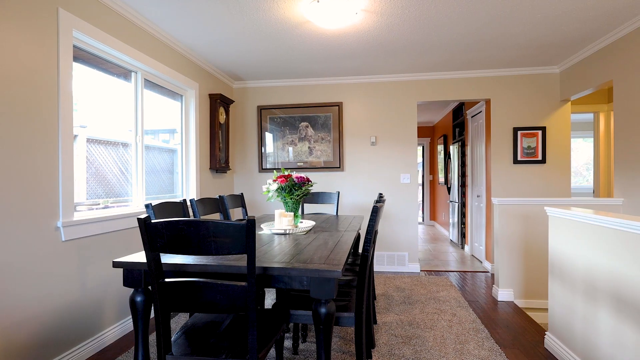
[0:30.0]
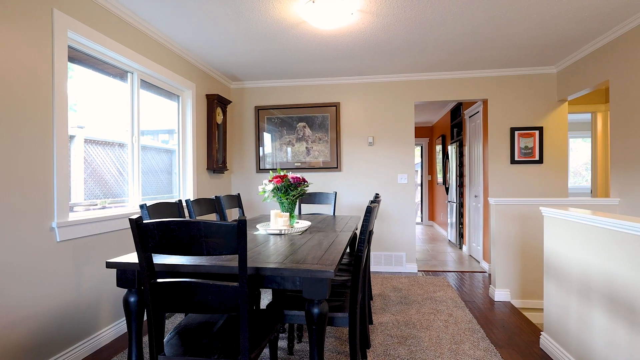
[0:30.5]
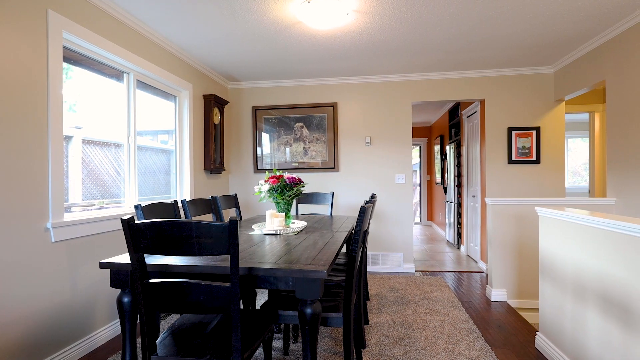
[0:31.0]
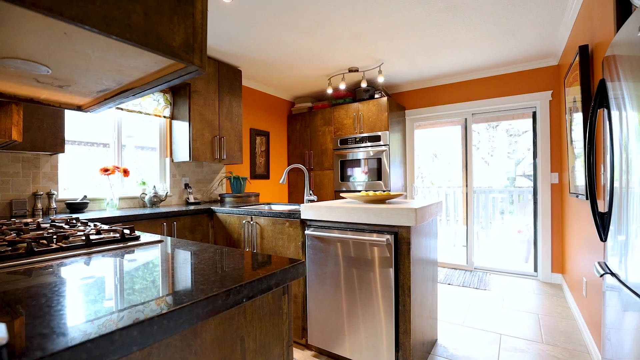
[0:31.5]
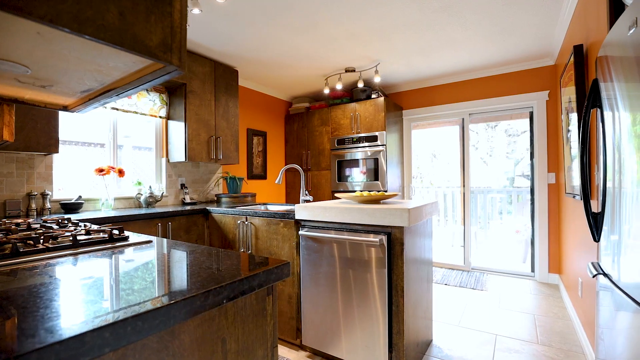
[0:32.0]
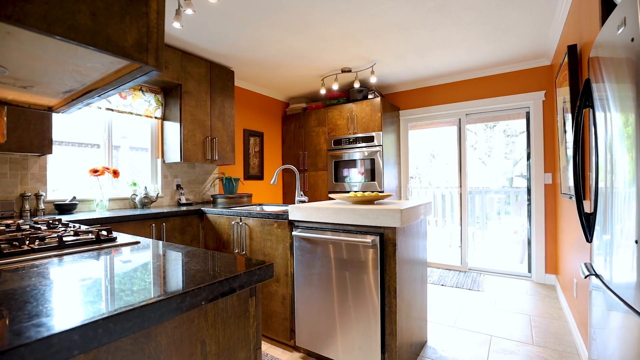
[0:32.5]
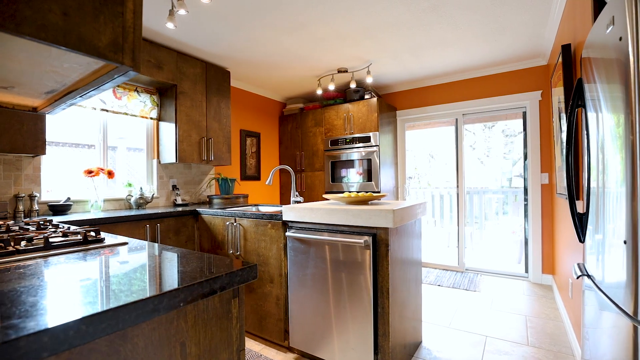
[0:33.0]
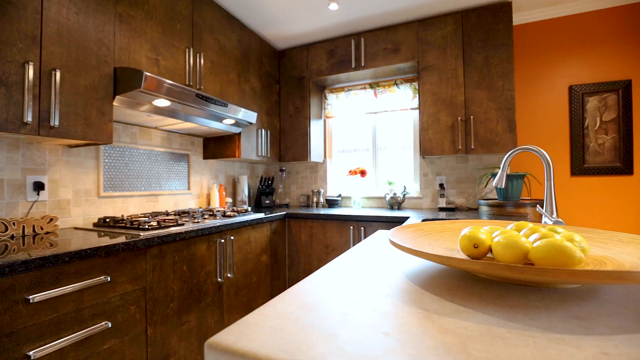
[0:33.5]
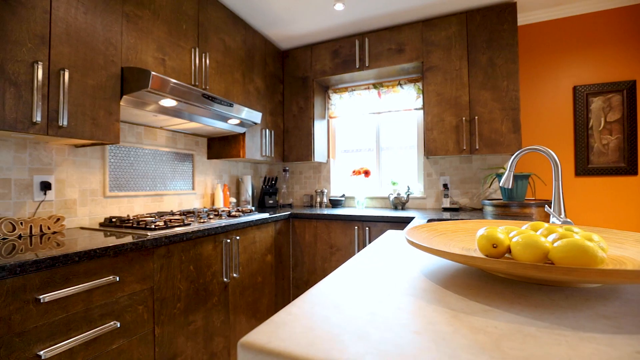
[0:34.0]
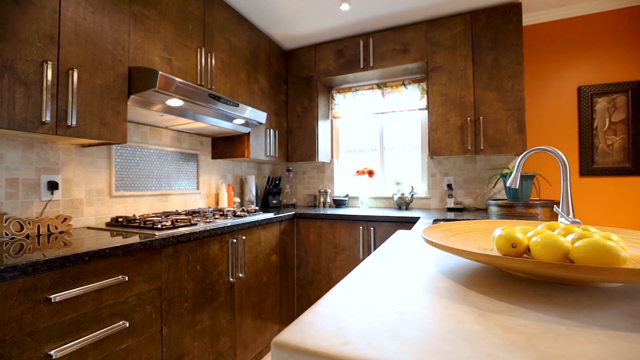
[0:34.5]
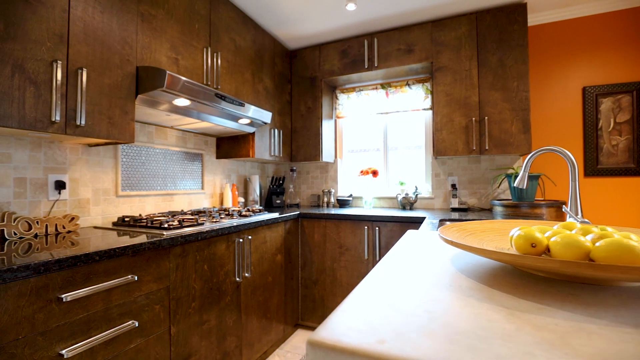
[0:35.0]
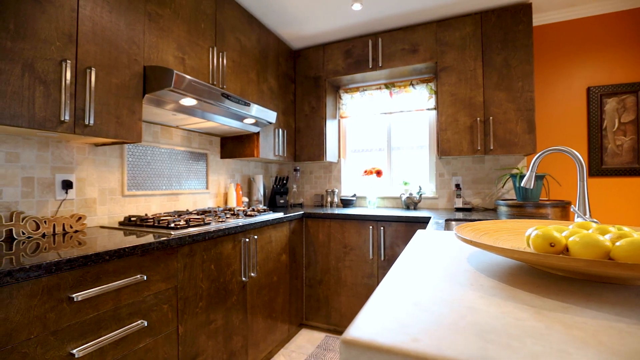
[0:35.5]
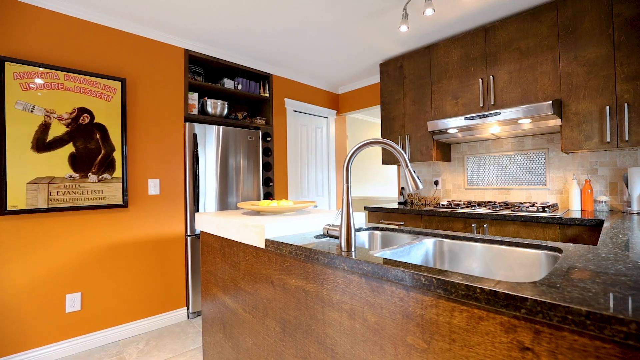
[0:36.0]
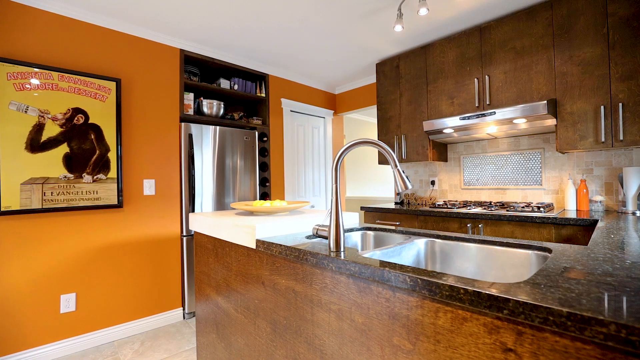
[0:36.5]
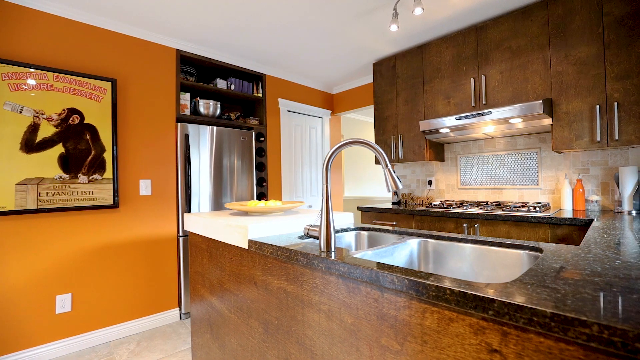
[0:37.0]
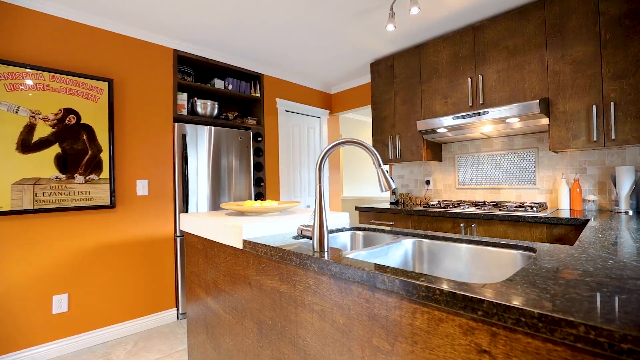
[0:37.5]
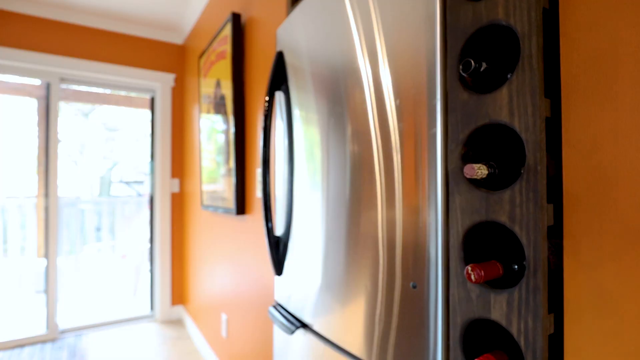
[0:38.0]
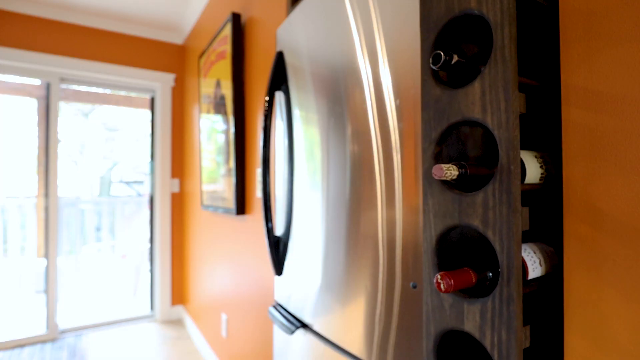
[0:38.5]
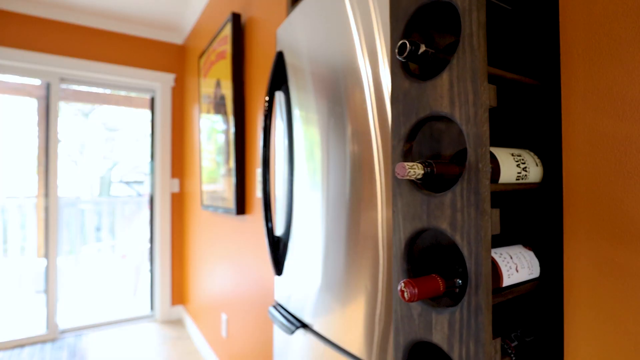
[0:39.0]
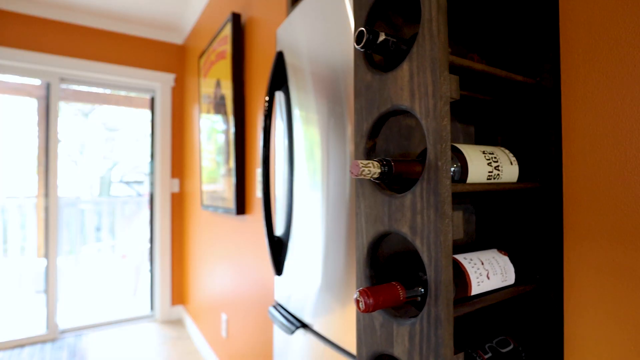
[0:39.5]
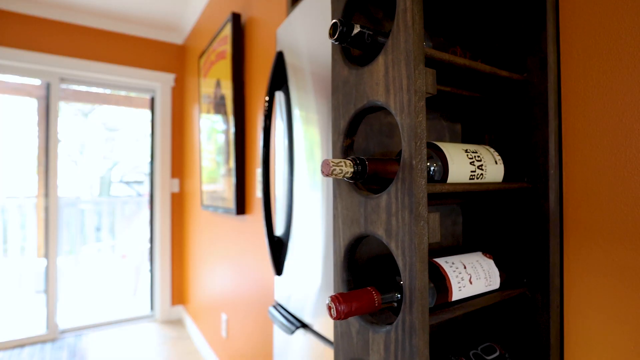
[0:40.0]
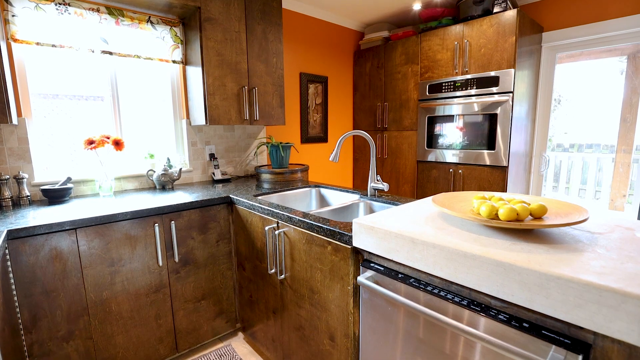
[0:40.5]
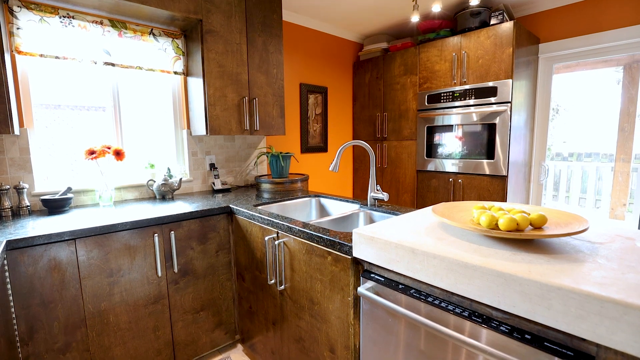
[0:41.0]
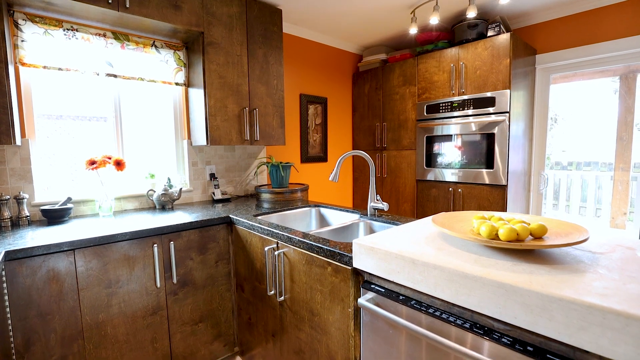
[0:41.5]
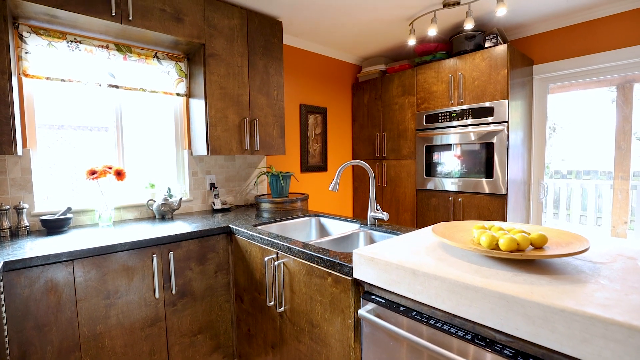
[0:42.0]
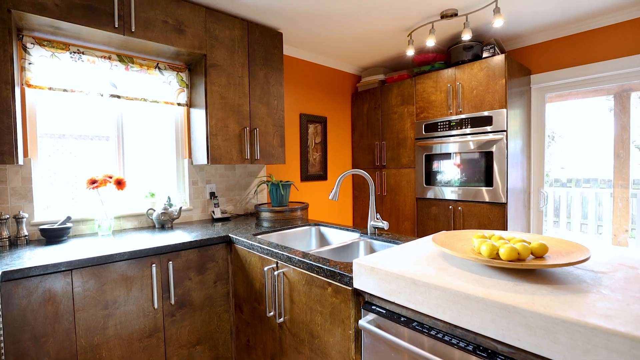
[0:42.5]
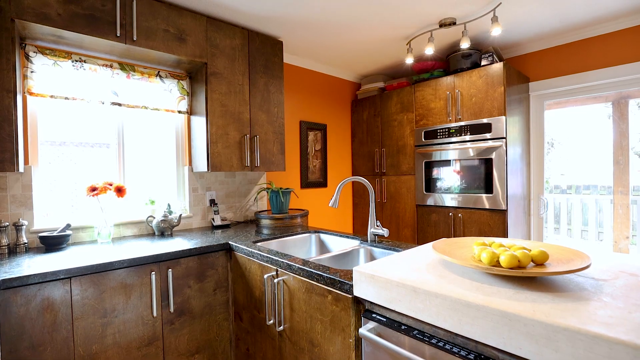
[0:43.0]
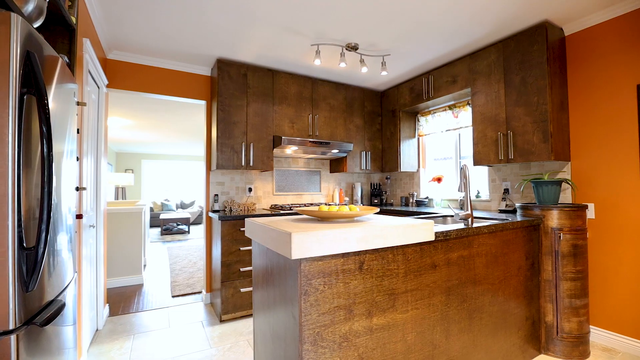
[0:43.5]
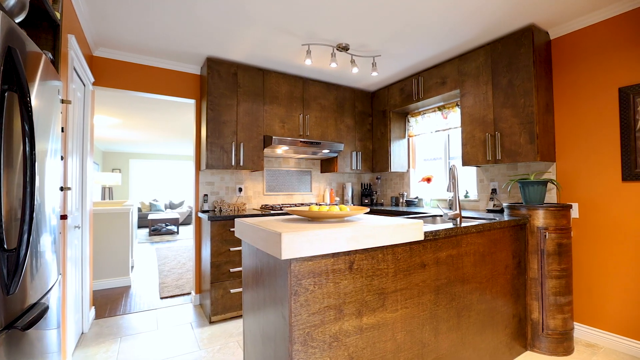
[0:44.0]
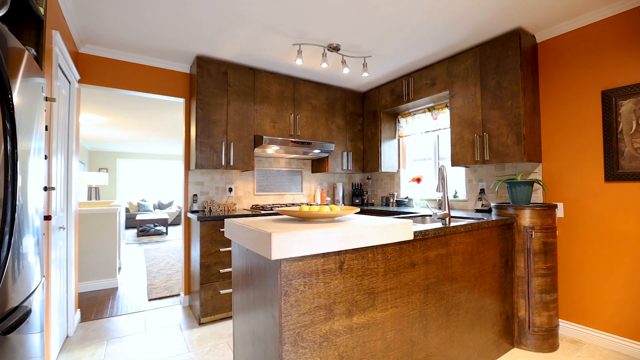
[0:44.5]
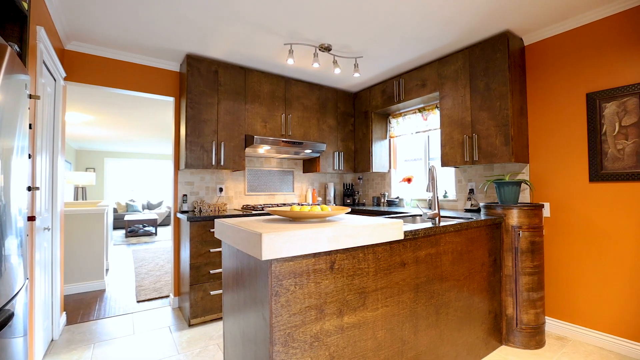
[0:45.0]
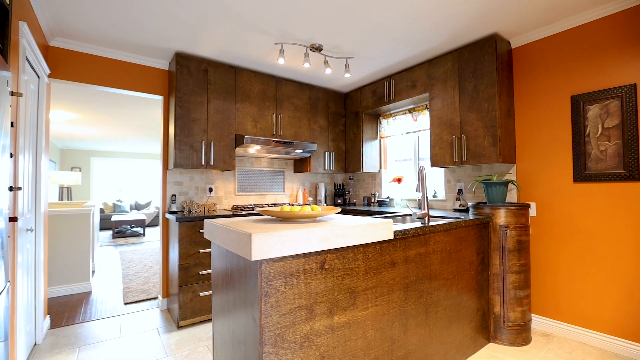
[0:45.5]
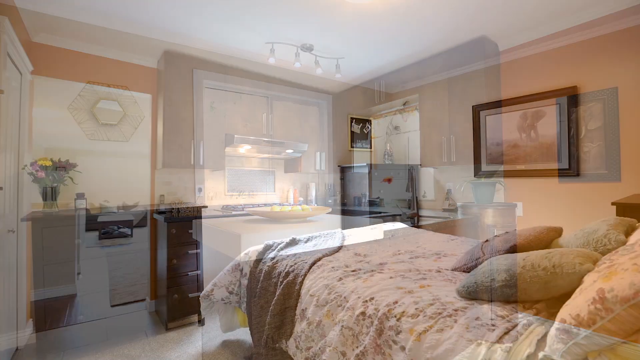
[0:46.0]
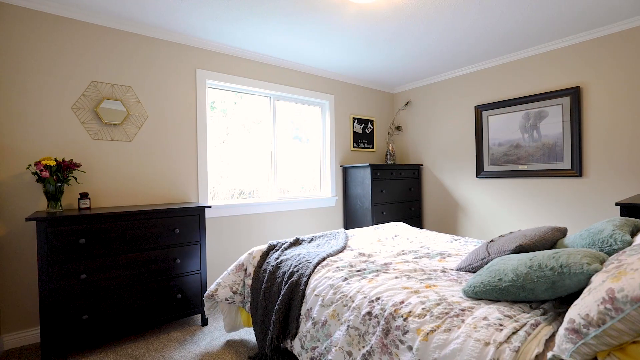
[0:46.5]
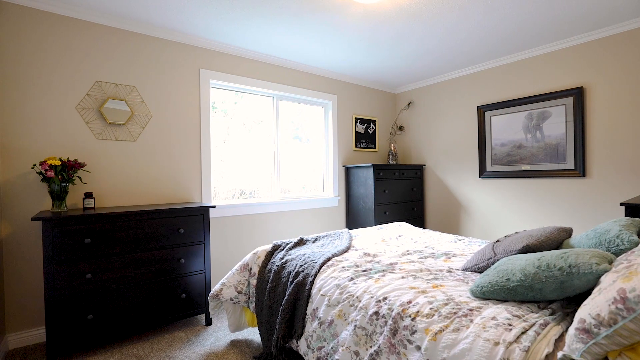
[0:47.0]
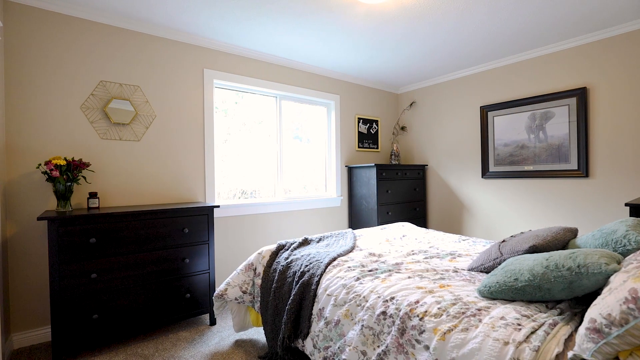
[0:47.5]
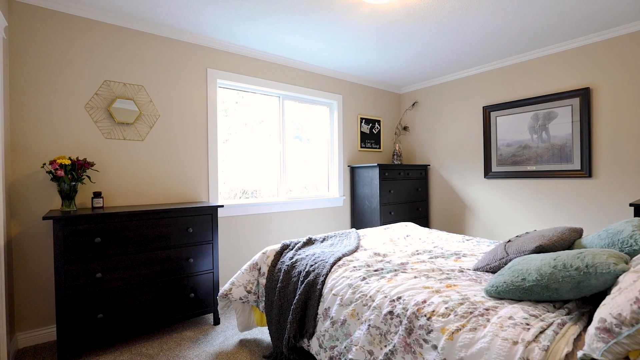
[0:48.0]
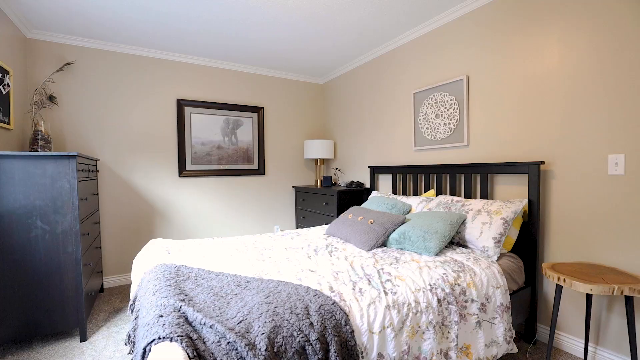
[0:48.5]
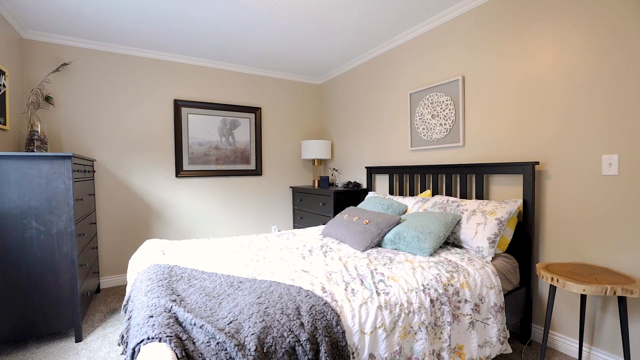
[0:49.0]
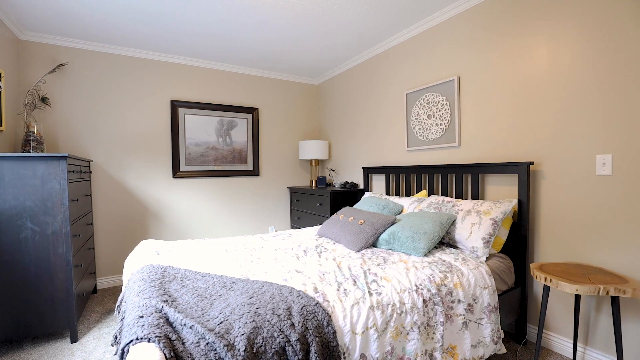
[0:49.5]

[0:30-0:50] The kitchen has dark wood and orange walls, with a white countertop. The view then switches to a bedroom with a black wood headboard as the camera pans through the home. In the kitchen there is a framed black picture of a monkey, kind of a cartoon monkey, and a marble countertop; the home looks remodeled. A wine rack is pulled out from the wall, revealing bottles of wine, and different areas of the kitchen are shown. The bedroom has light tan walls and a bedspread with kind of a light gray and white pattern, topped with light gray and teal throw pillows. The view goes back to the dining room with the black wood table and chairs, and there is a bowl of fruit, looks like maybe pears, on the kitchen countertop.